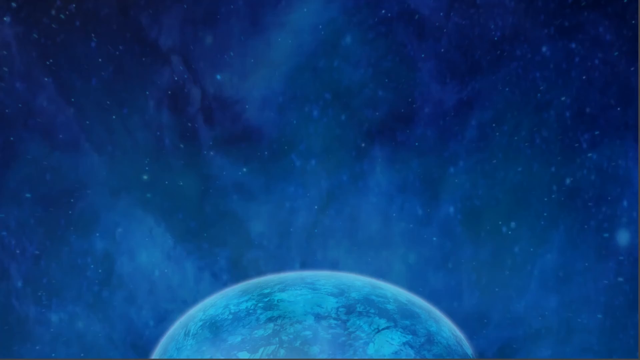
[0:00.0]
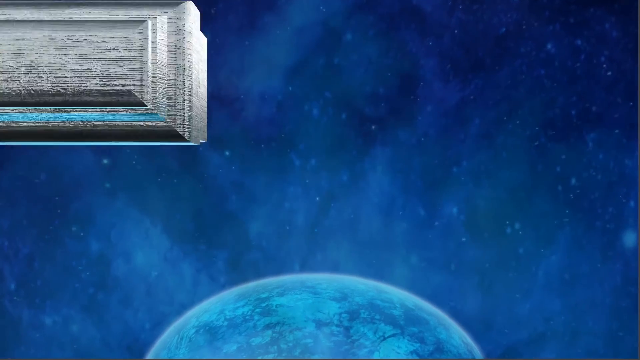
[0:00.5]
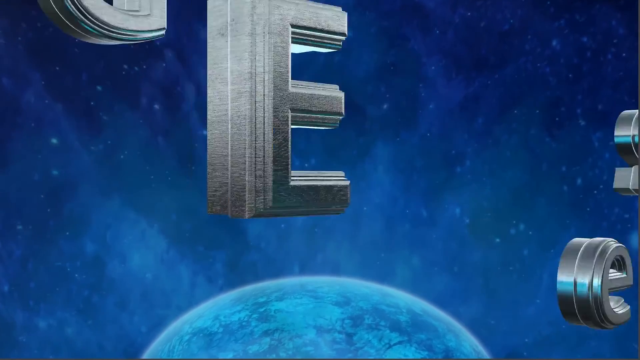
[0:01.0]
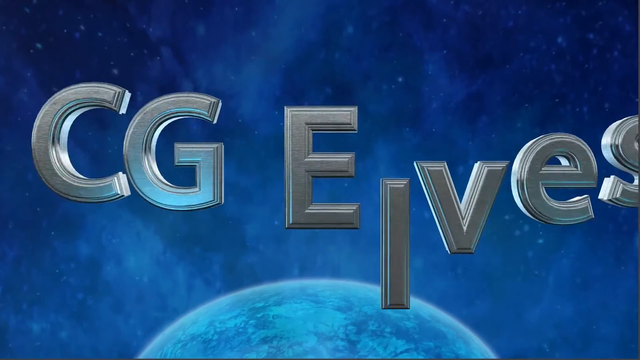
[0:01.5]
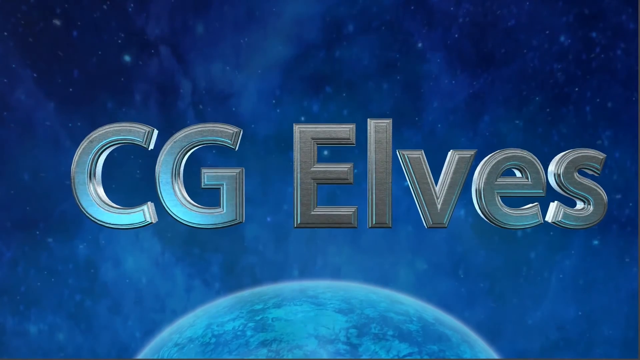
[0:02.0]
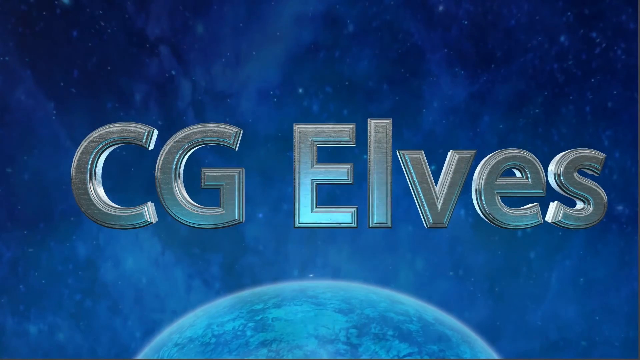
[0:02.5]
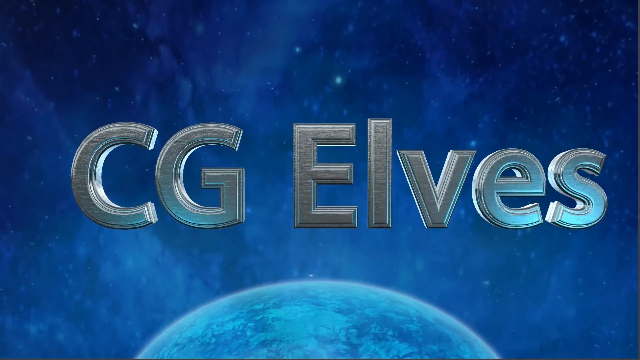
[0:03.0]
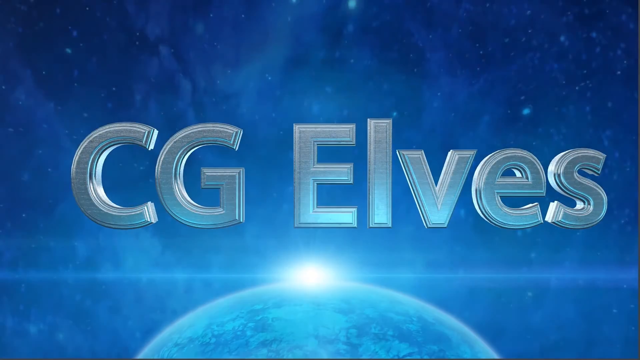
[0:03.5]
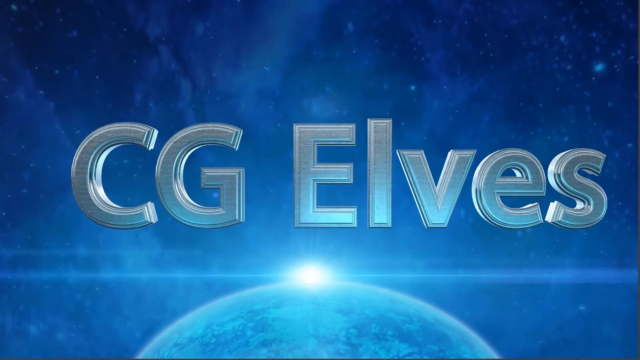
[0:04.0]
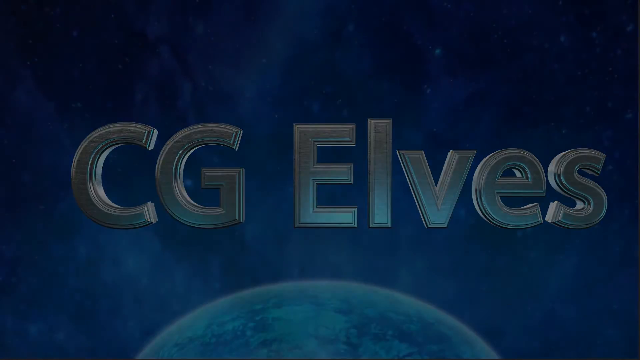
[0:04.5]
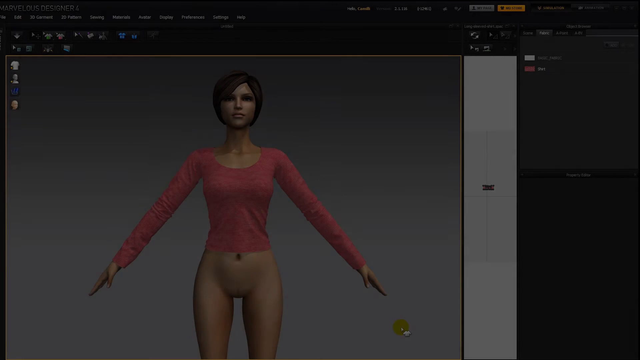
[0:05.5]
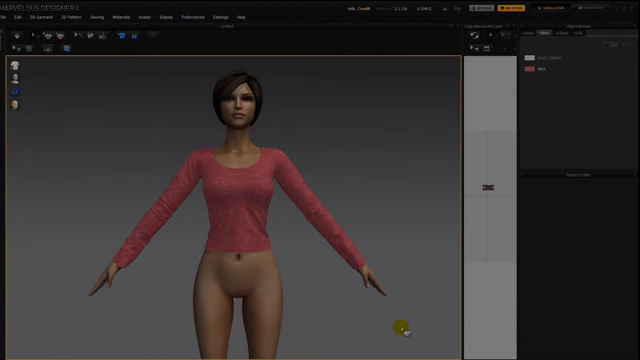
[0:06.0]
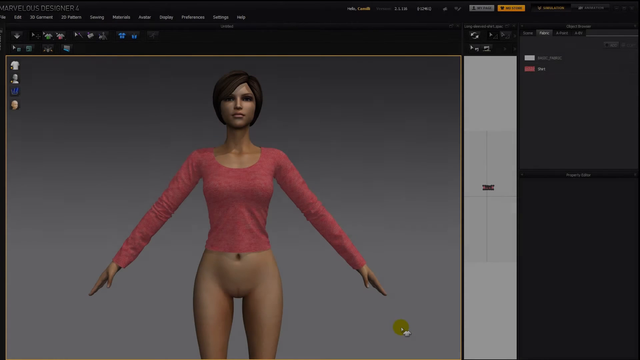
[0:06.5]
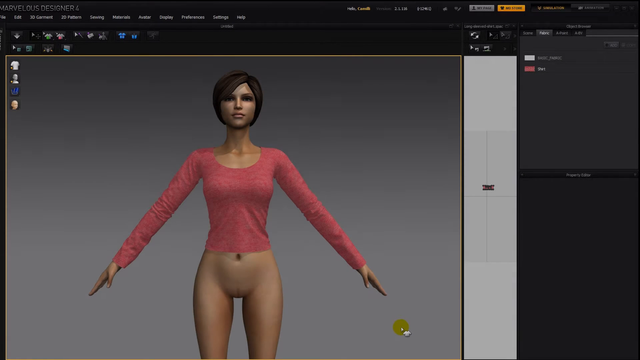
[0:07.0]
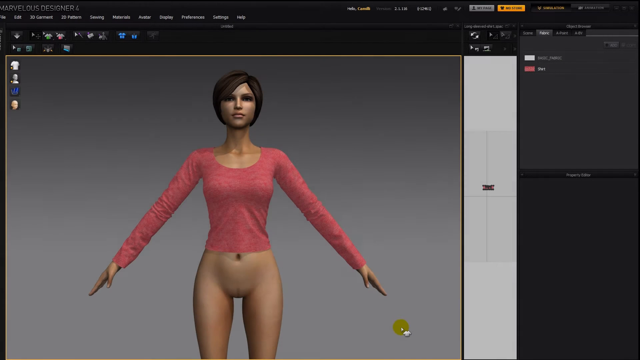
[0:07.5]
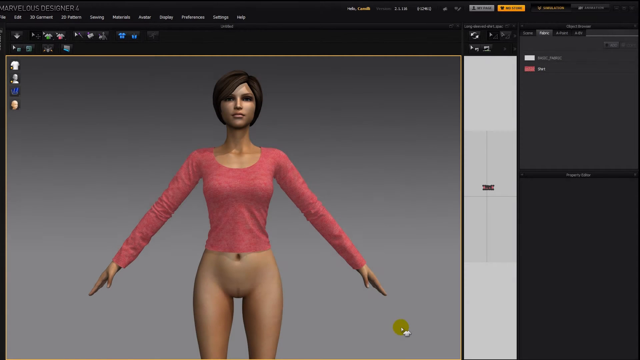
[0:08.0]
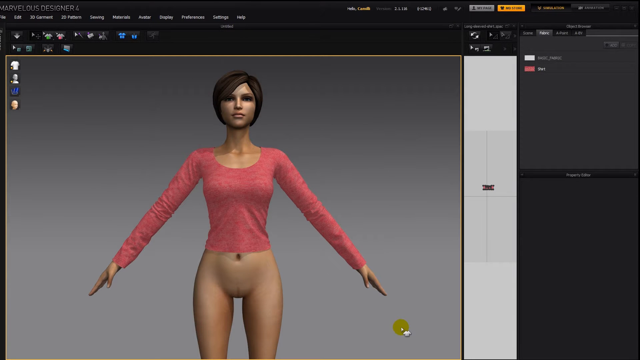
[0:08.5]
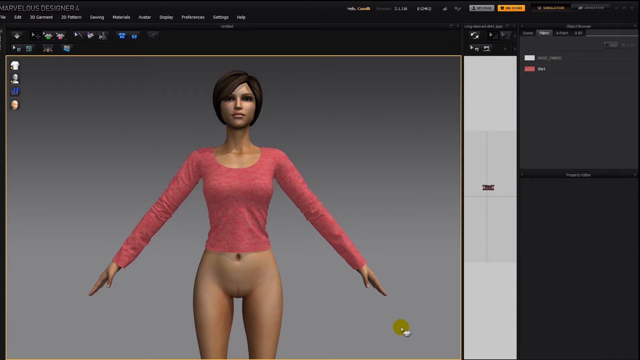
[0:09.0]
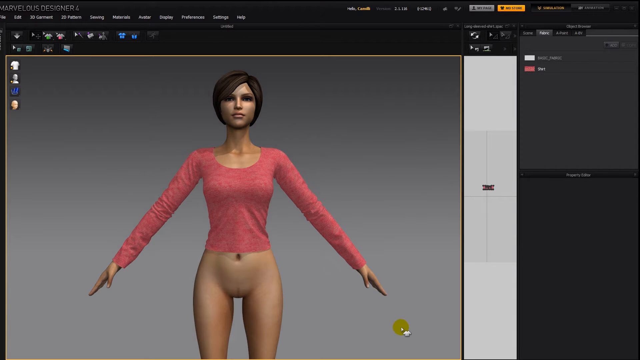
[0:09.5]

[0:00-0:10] The video opens on a night sky with many galaxies in the background and what seems to be a planet below it, along with a logo that says "CG elves." The screen then changes to an animated woman wearing just a shirt, which is pink and long-sleeved. She has her arms out and has dark short hair.